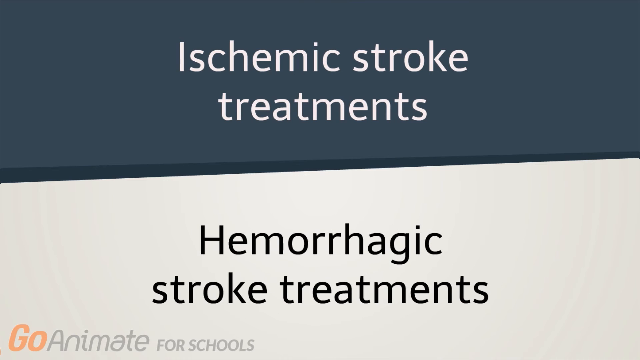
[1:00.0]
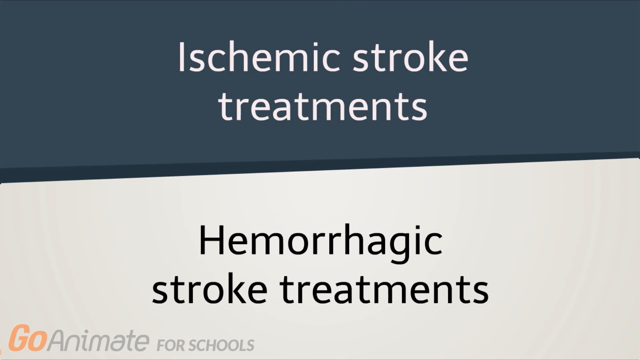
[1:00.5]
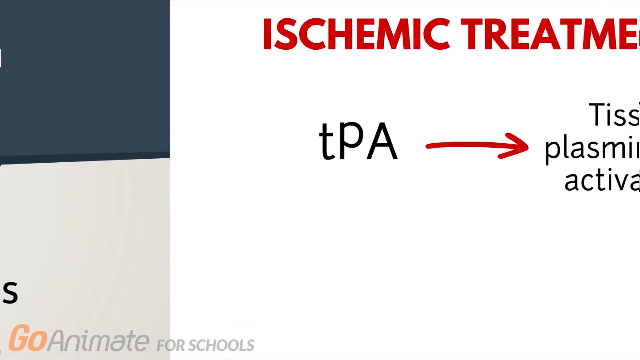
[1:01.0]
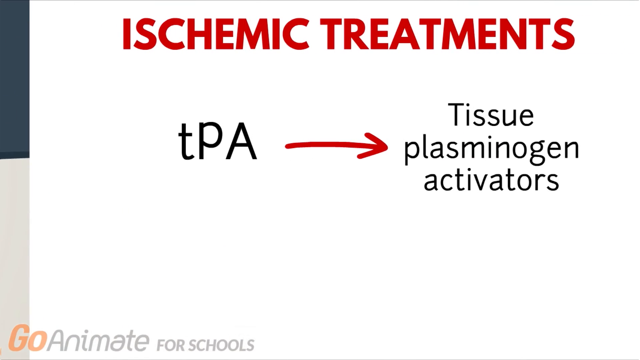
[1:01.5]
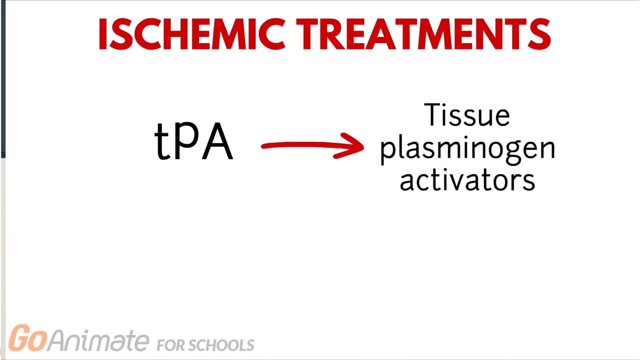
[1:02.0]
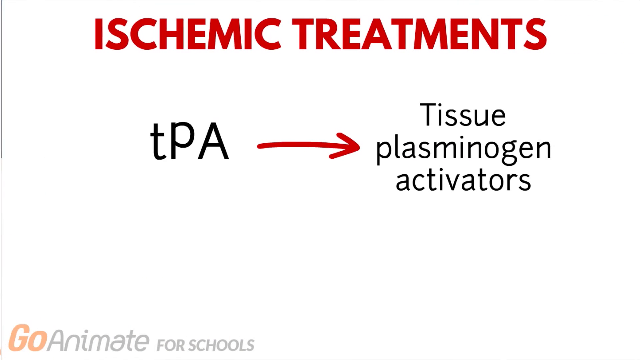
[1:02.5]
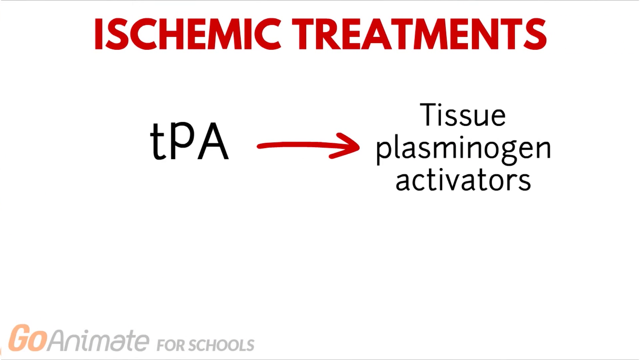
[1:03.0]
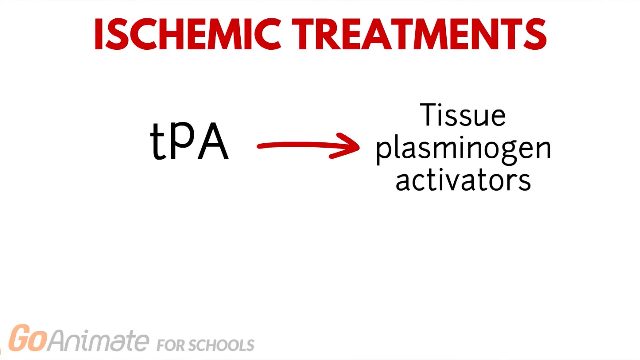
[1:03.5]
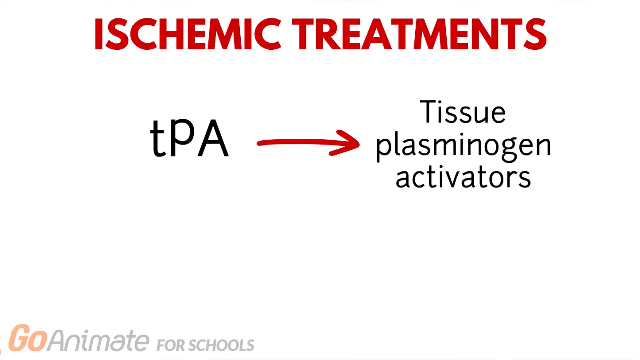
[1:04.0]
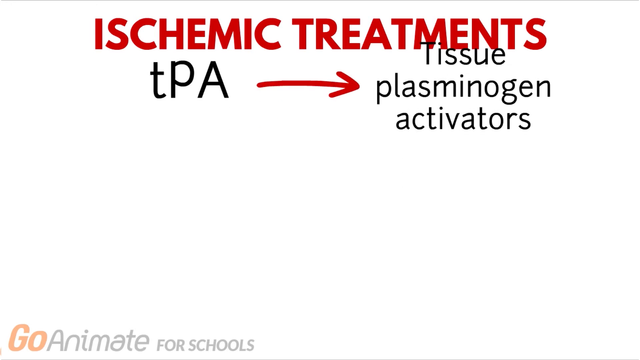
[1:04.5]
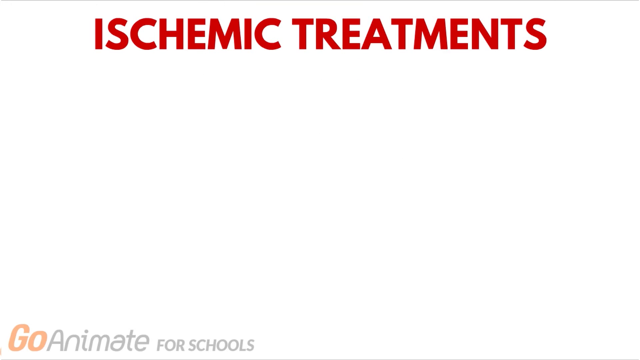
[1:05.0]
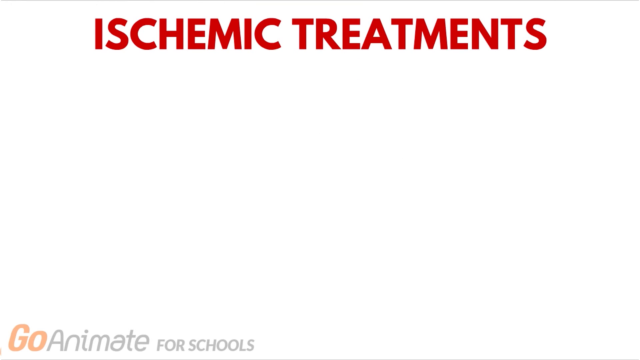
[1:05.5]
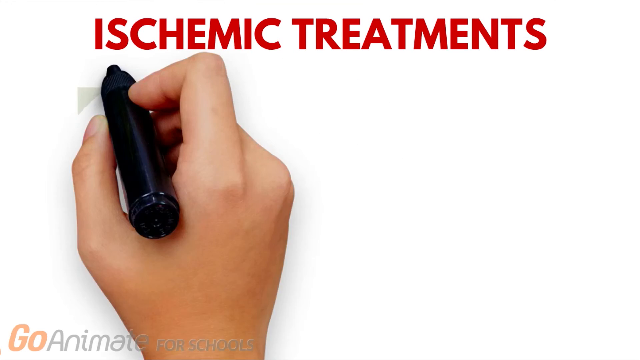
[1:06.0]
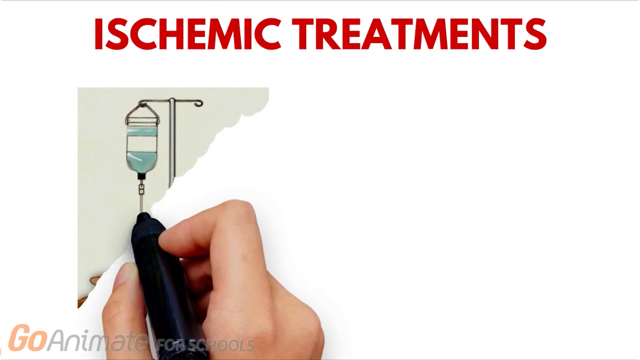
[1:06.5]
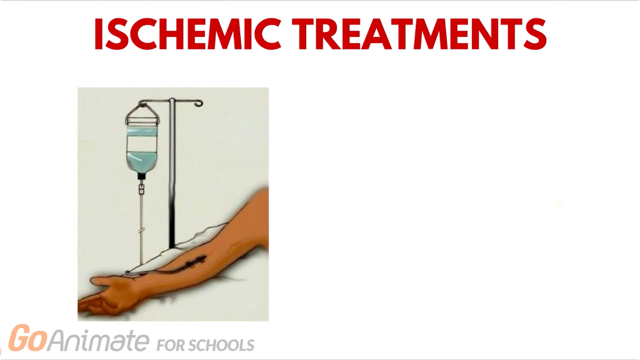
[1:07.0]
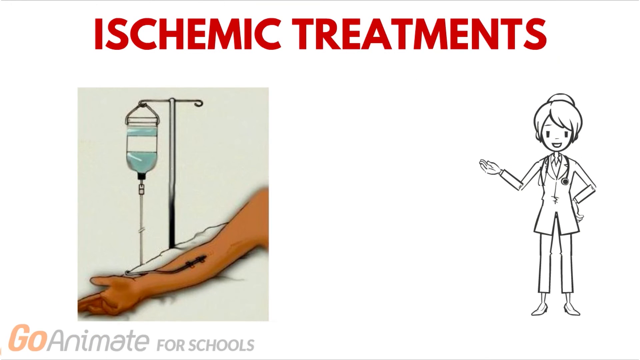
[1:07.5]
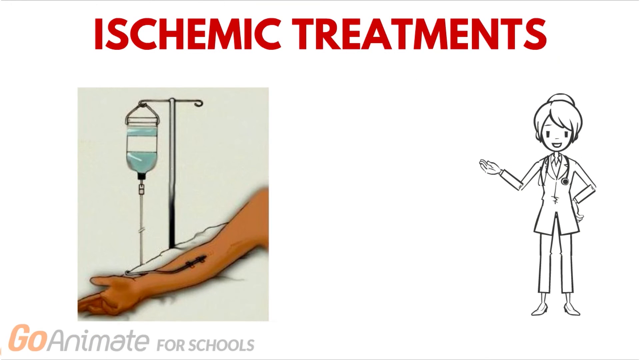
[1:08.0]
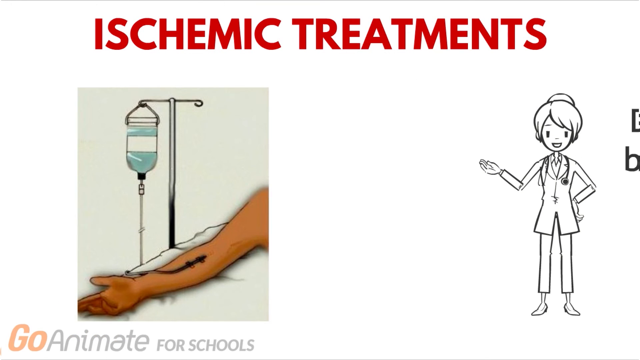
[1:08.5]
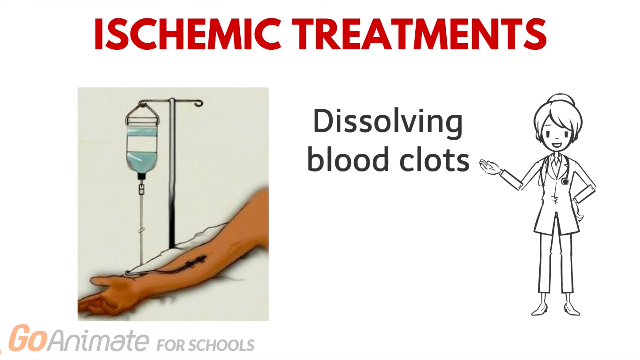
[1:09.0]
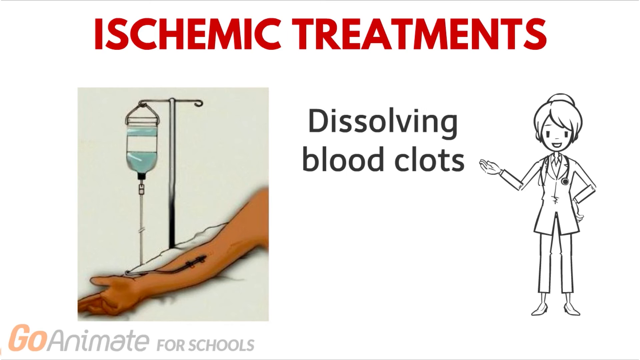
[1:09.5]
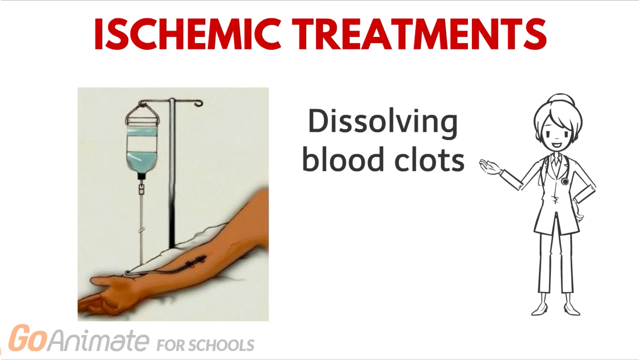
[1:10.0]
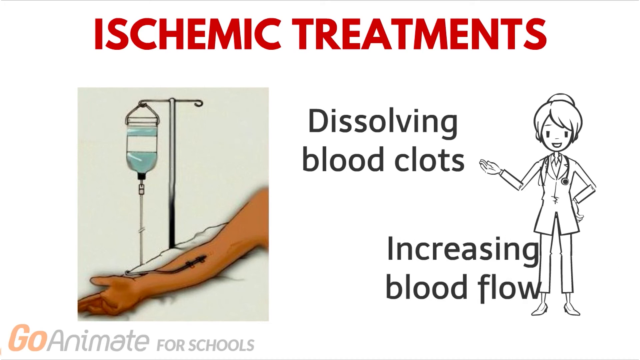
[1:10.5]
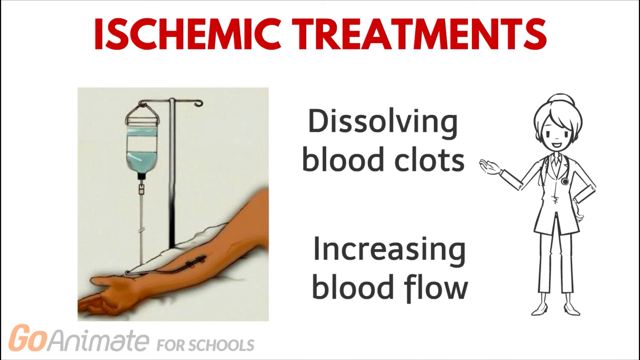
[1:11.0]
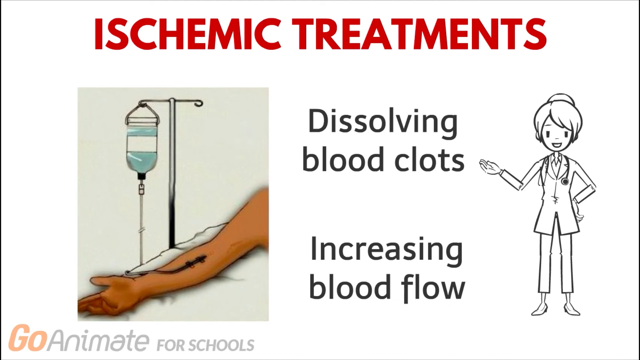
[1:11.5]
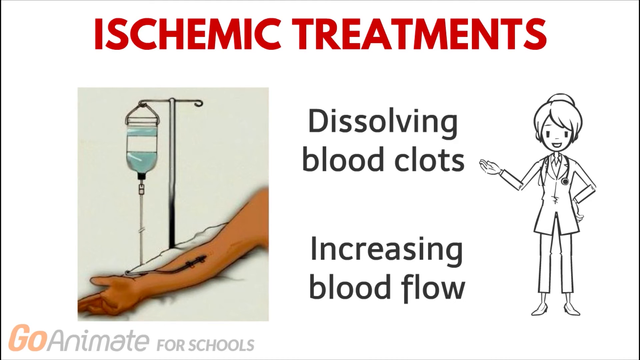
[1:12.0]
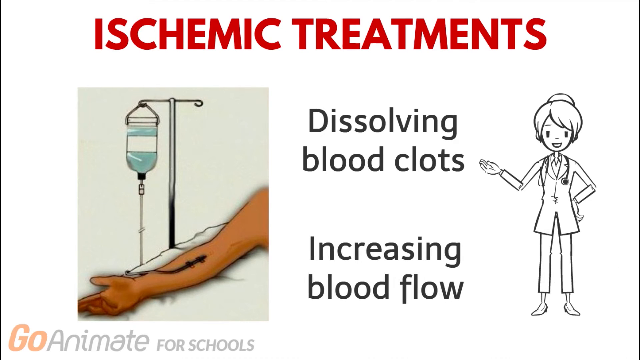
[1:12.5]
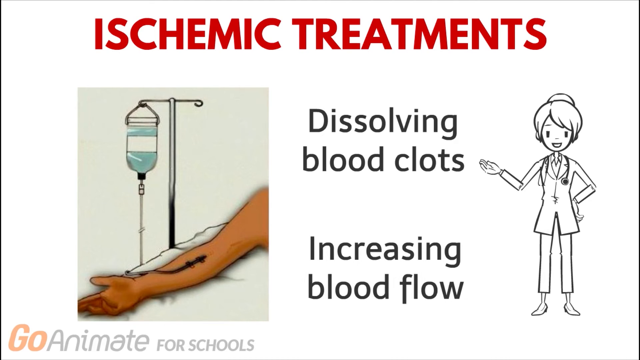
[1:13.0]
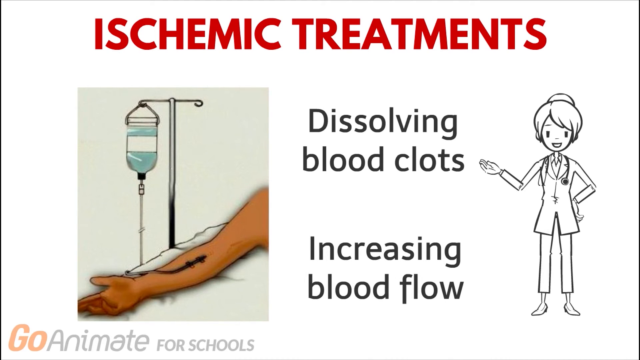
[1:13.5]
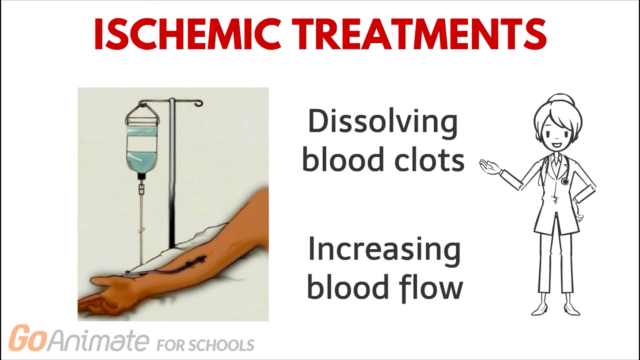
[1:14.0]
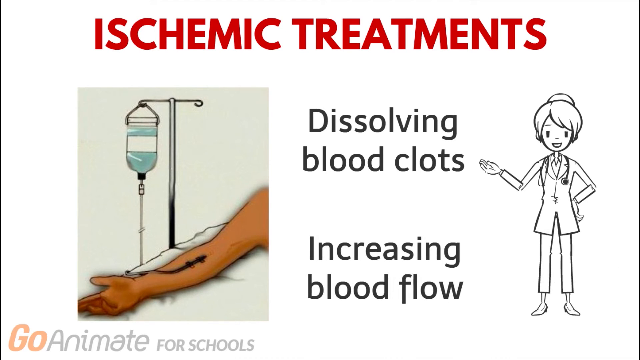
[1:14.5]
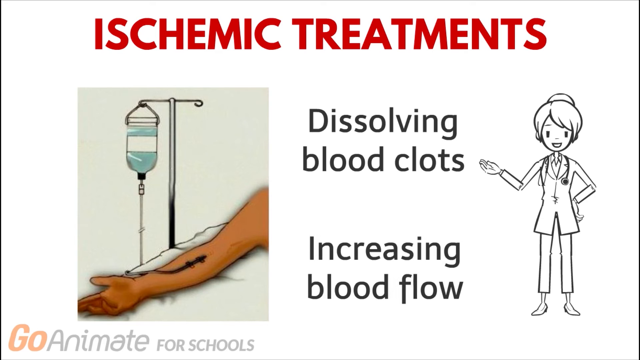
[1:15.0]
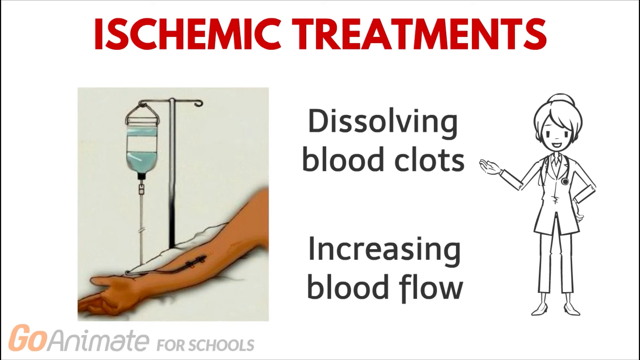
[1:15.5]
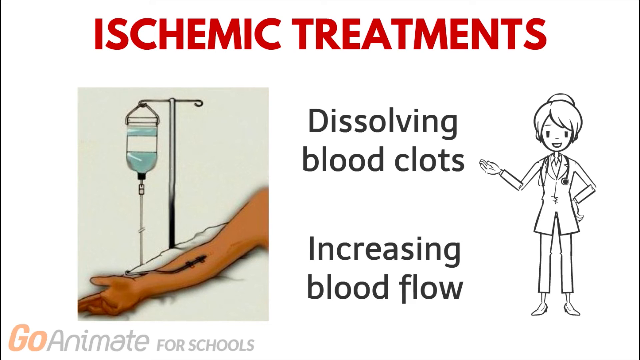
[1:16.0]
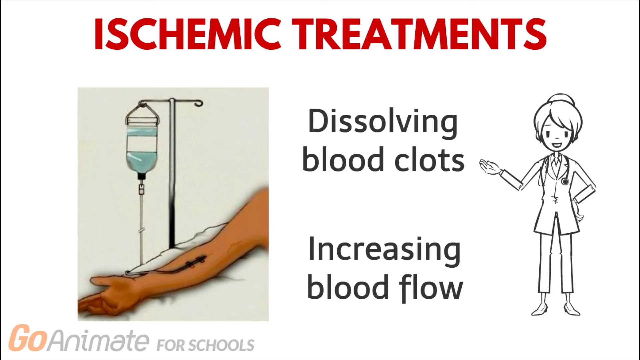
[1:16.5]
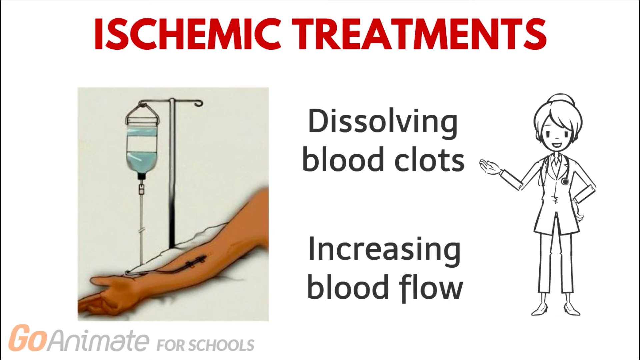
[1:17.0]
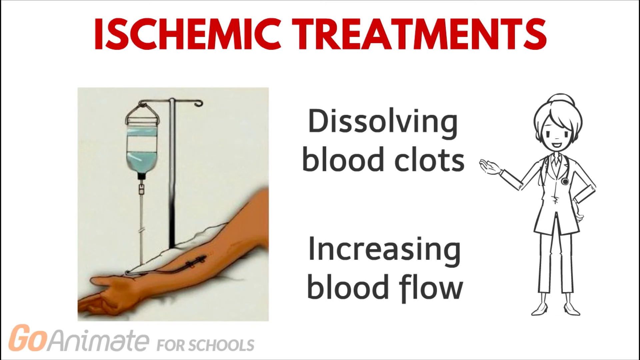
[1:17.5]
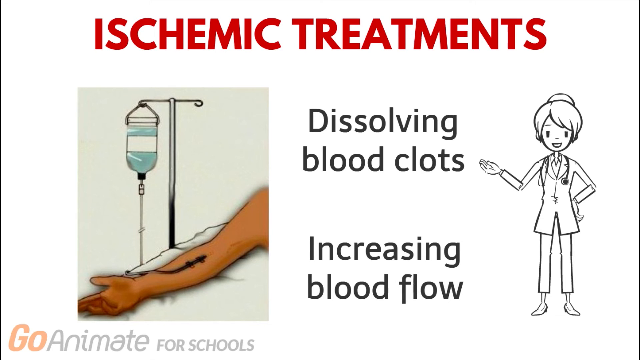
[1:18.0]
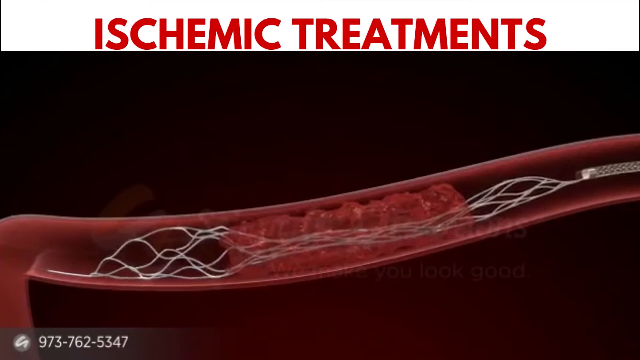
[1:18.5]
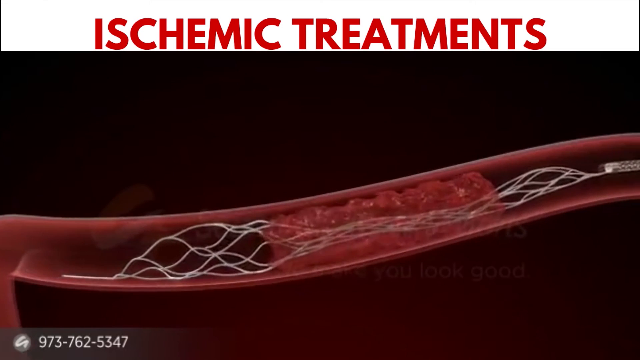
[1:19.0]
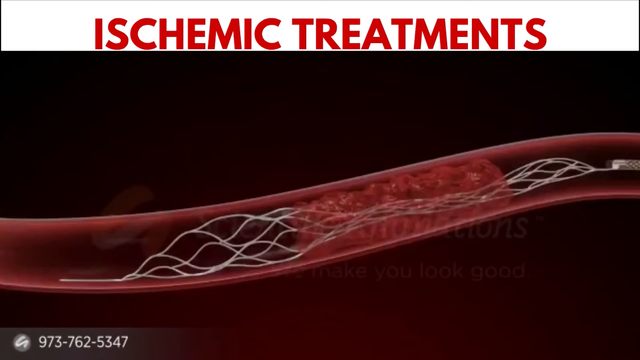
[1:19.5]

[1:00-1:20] The screen is split between gray at the top and beige at the bottom. Over the gray at the top, text says "ischemic stroke treatments," and at the bottom, black text says "hemorrhagic stroke treatments." The screen moves on to a white background that says "ischemic treatments." Below that is "TPA" with a red arrow going to the right, and on the right is text that says "tissue plasminogen activators." A human hand draws a human arm, the underside, lying flat against a pillow, with an IV pole and an IV bag going into the arm. On the left, a cartoon figure wearing a suit with a stethoscope around its neck points to the arm with the IV bag. Text then streams across the background, saying "dissolving blood clot and increasing blood flow." An open vein then comes across the screen, with "ischemic treatments" in red text on top.